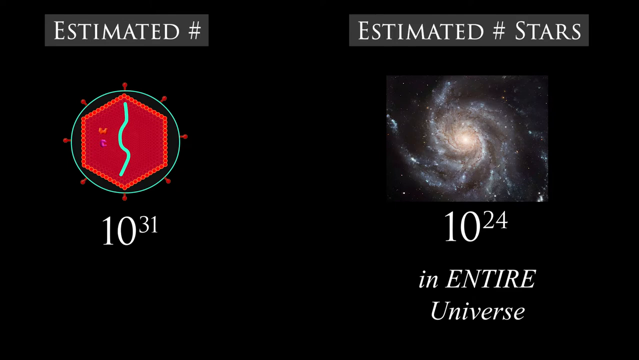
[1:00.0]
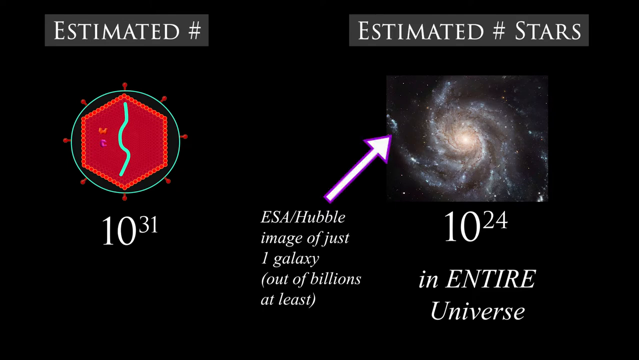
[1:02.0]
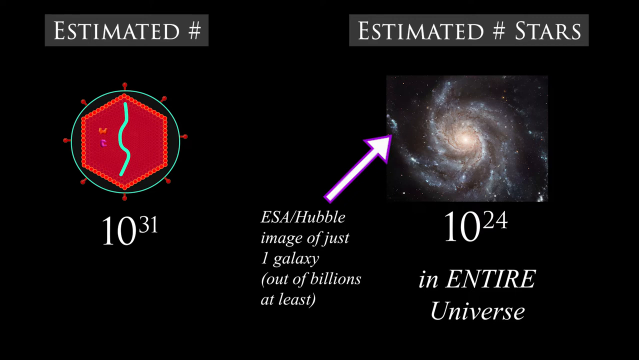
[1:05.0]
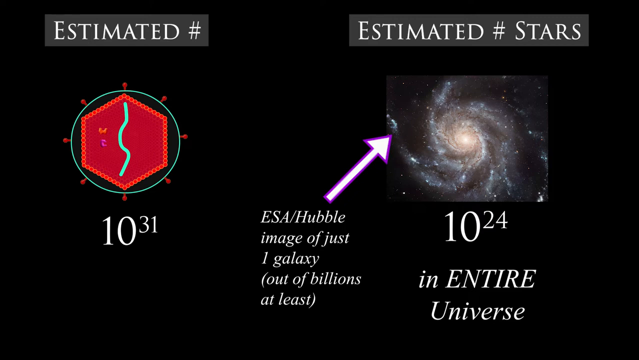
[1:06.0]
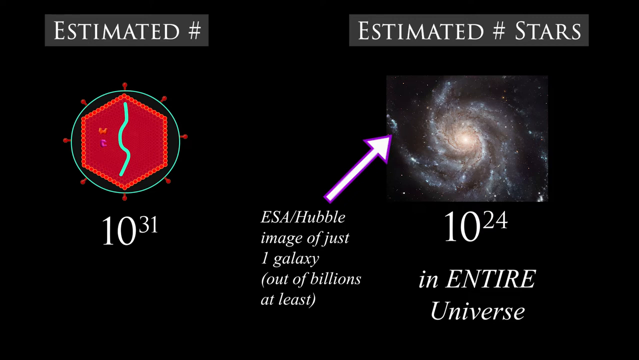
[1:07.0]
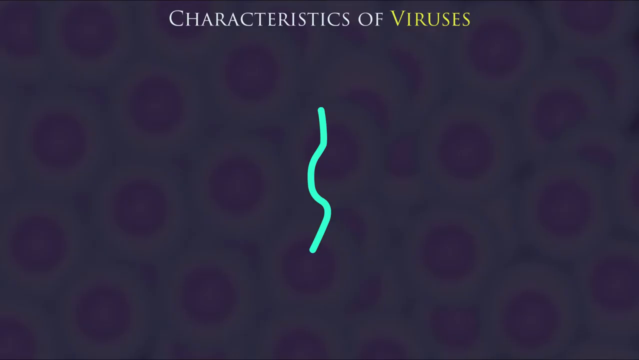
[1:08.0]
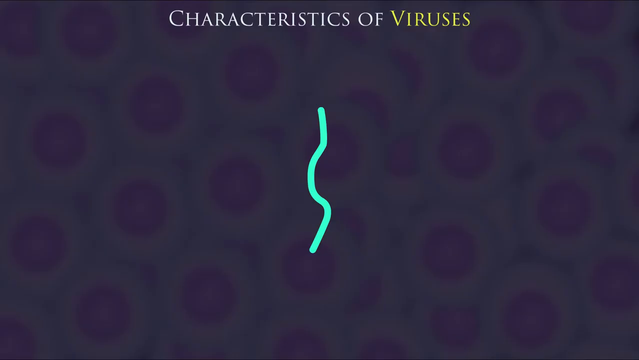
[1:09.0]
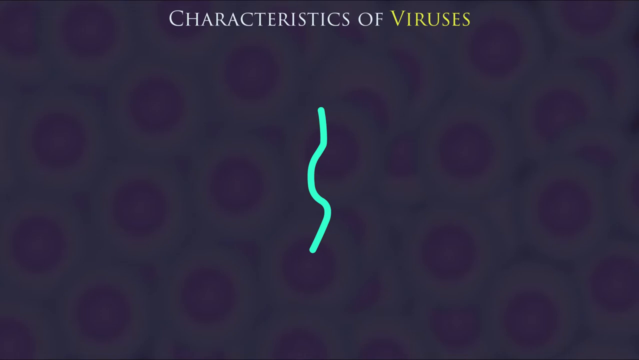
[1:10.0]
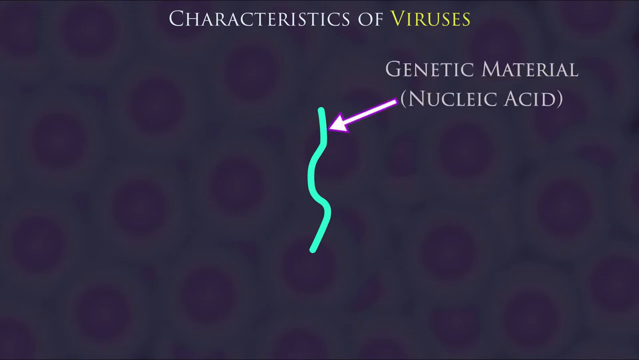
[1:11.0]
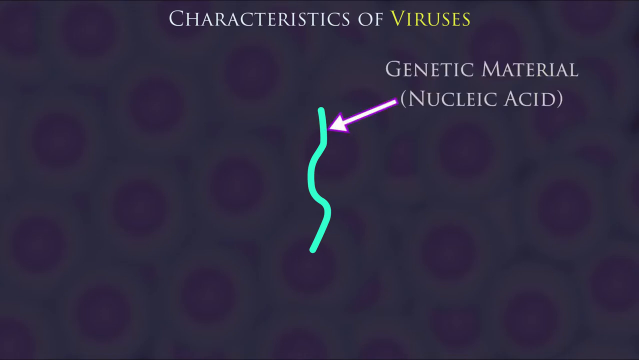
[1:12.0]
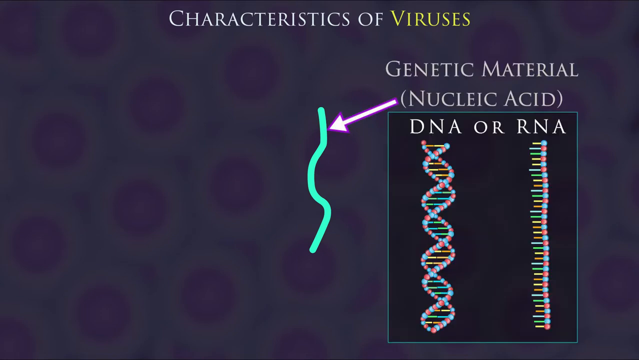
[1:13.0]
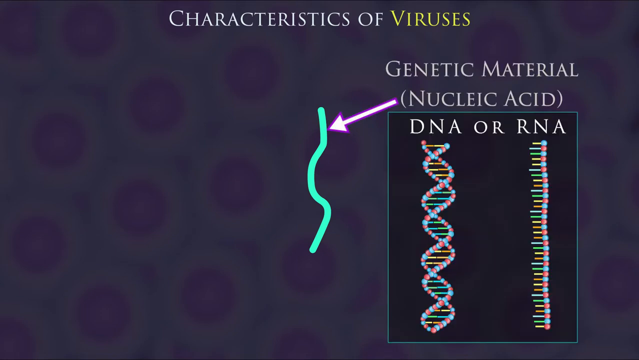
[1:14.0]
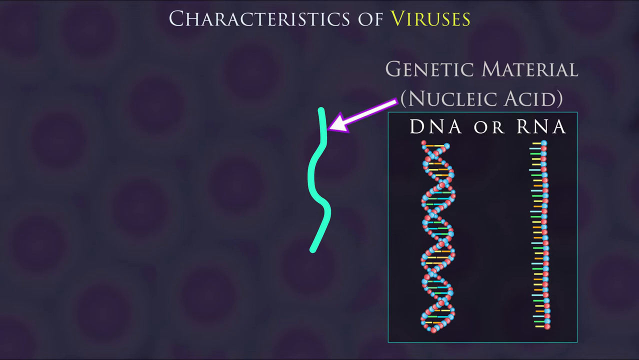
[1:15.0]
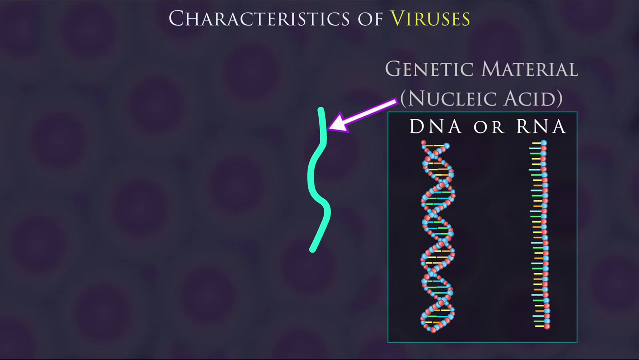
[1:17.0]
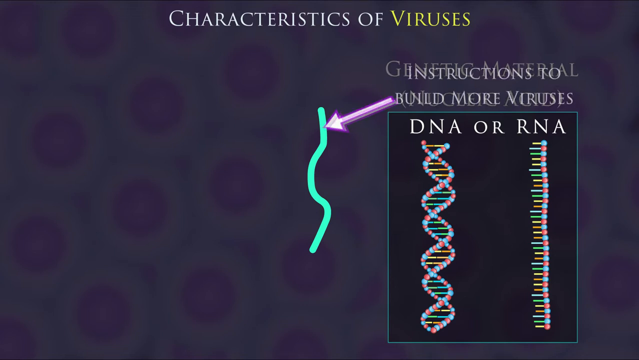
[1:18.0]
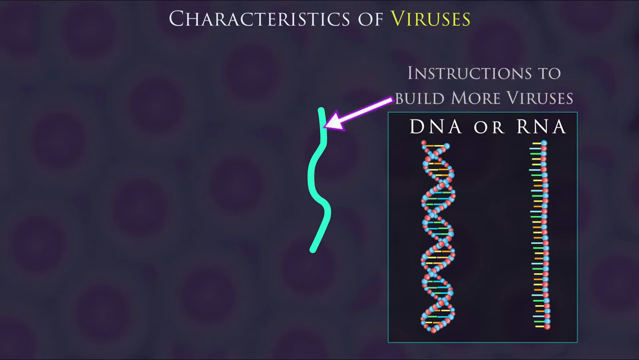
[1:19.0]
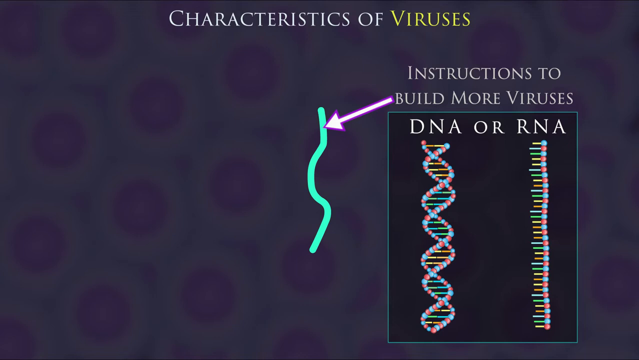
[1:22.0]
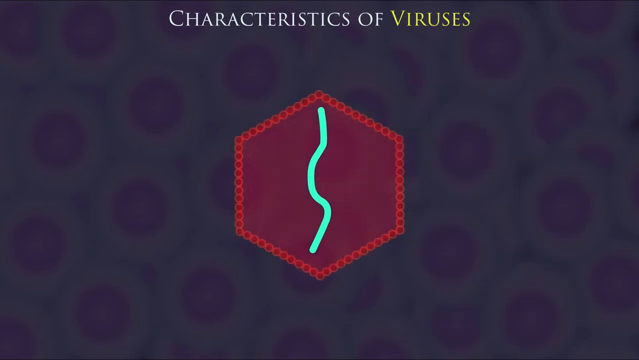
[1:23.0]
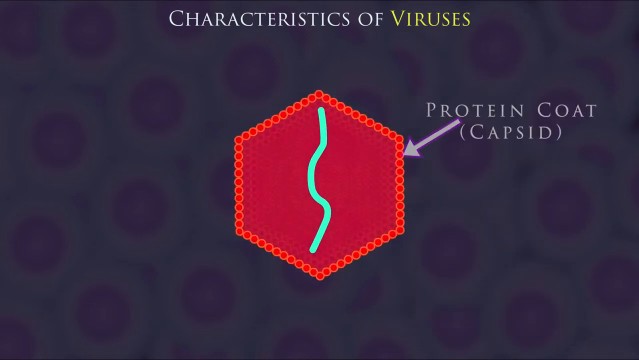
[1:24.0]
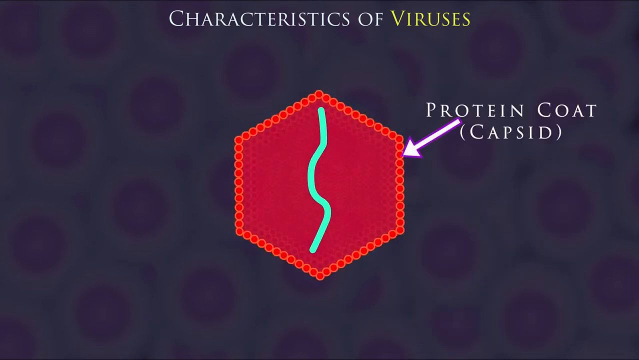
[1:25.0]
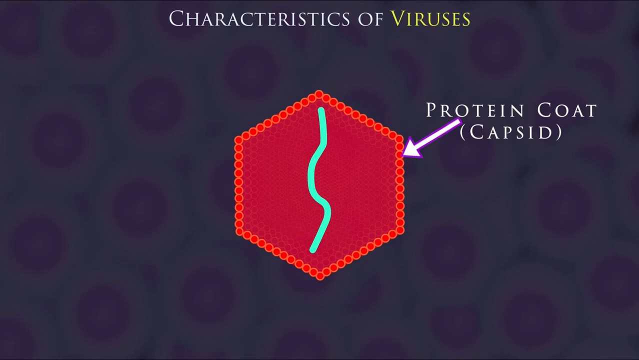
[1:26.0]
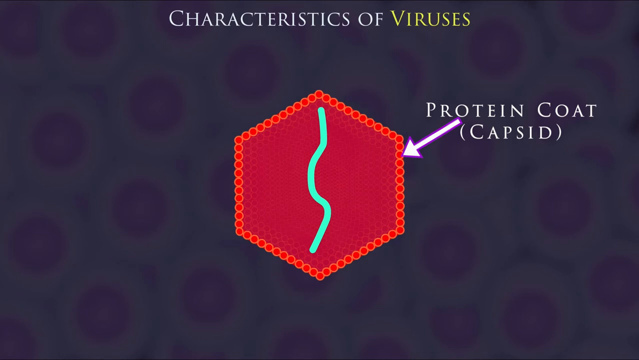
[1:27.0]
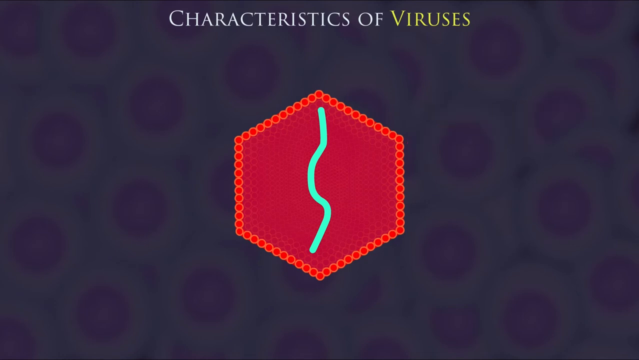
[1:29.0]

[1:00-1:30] A comparison is shown between a virus, tiny and molecule-sized, and the estimated number of stars in the sky, apparently illustrating how many viruses could fit into the entire universe. A virus cell is on the left and the universe, shown as a constellation of stars, is on the right. The video then changes to the characteristics of viruses: in the center of the screen is the virus's genetic material, nucleic acid, DNA or RNA, represented by a kind of bluish-green line with an arrow pointing to it. The next screen says "protein coat," a capsid that coats the virus strand.